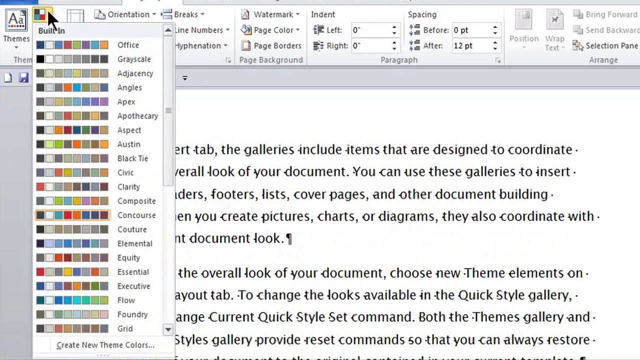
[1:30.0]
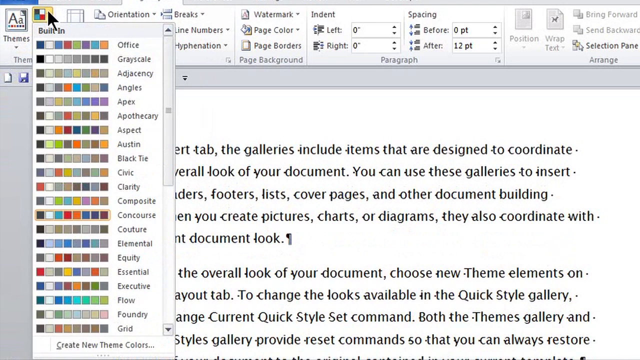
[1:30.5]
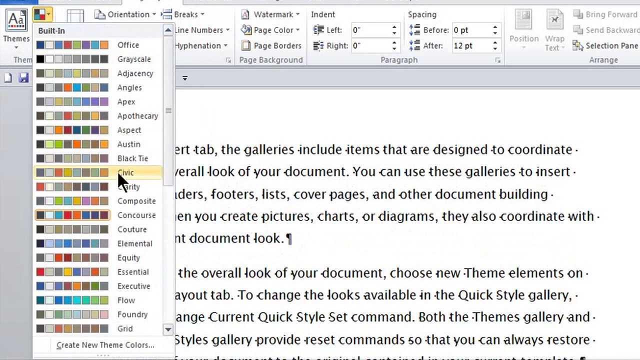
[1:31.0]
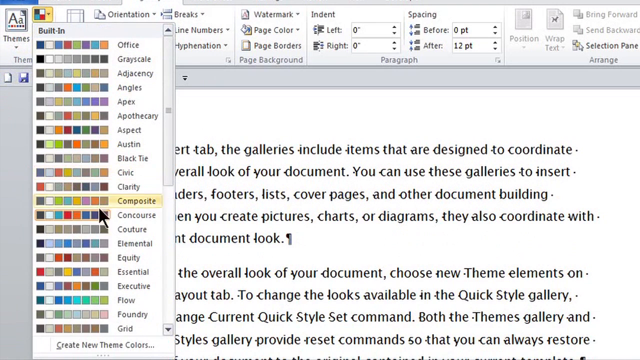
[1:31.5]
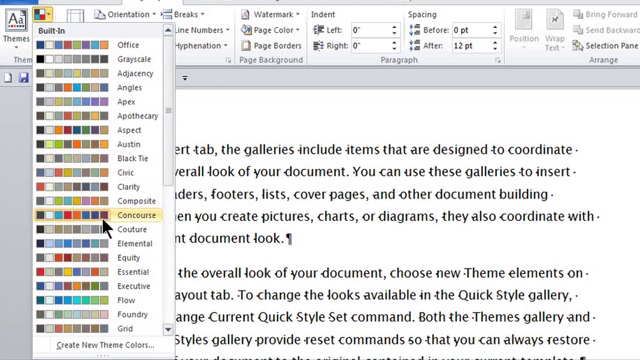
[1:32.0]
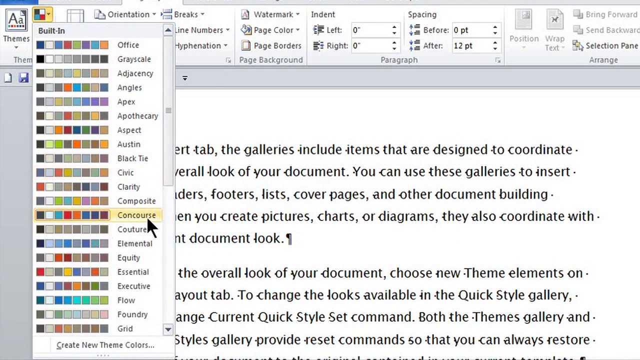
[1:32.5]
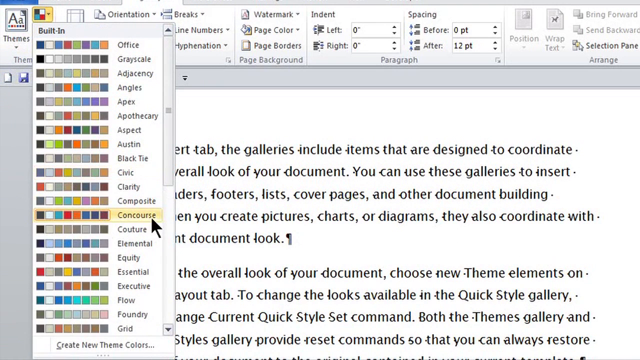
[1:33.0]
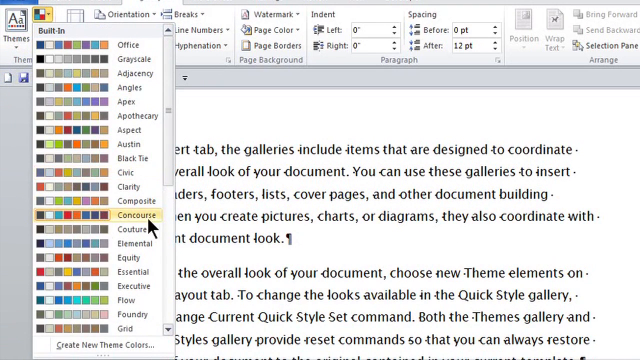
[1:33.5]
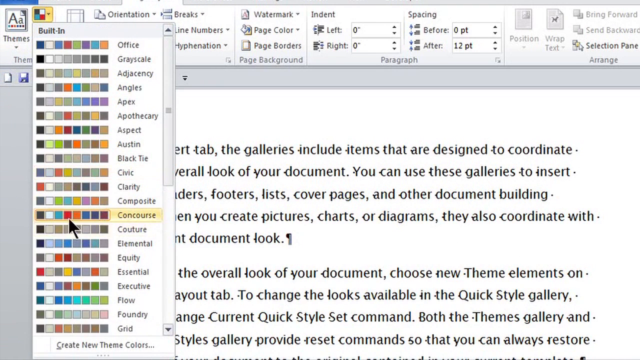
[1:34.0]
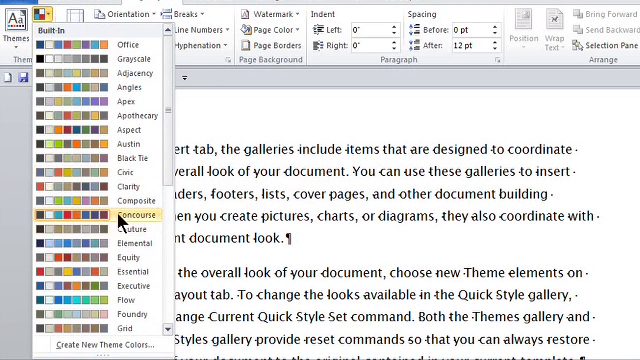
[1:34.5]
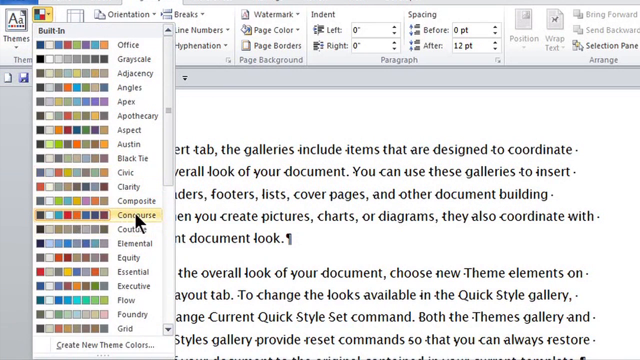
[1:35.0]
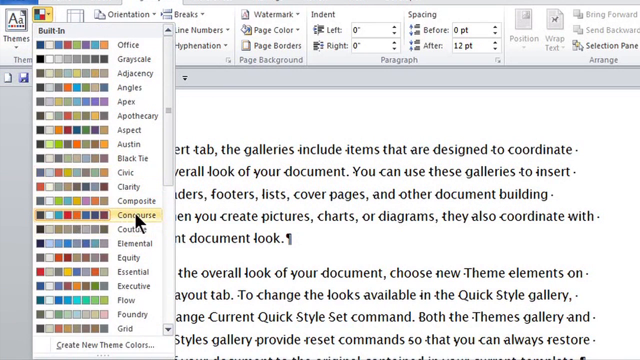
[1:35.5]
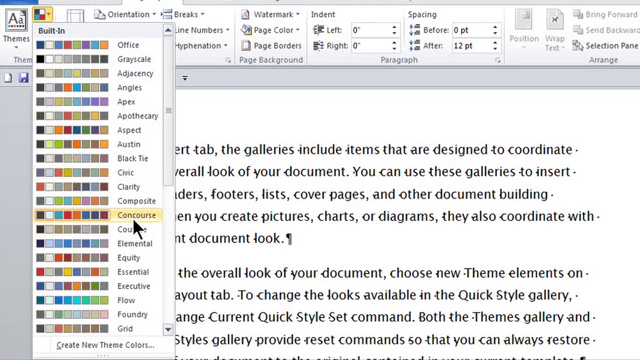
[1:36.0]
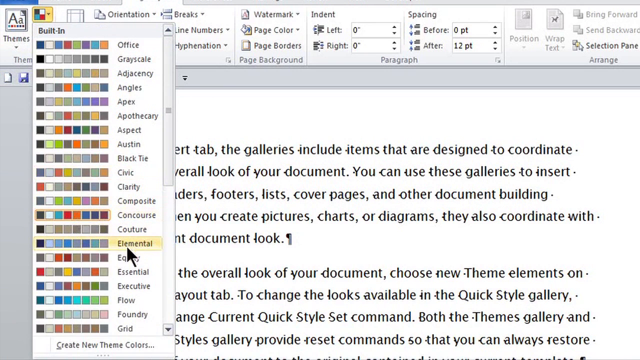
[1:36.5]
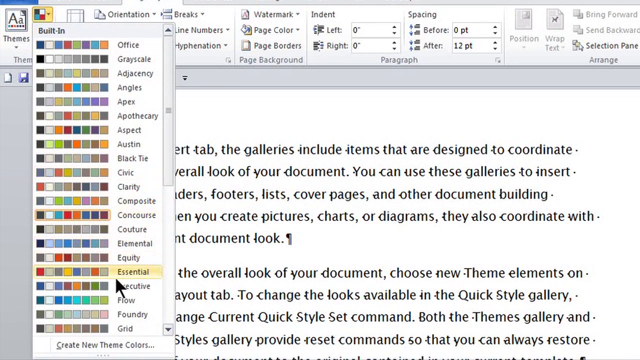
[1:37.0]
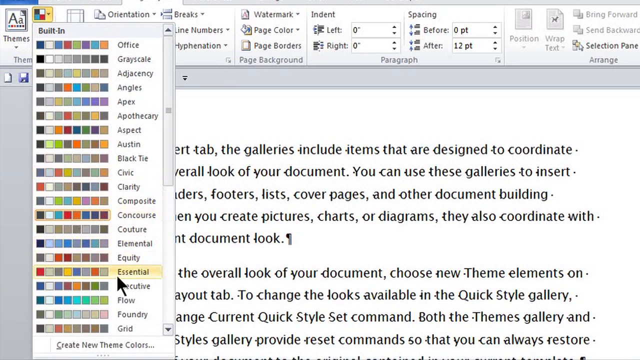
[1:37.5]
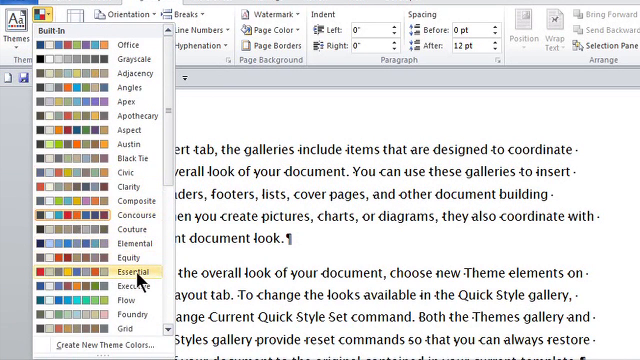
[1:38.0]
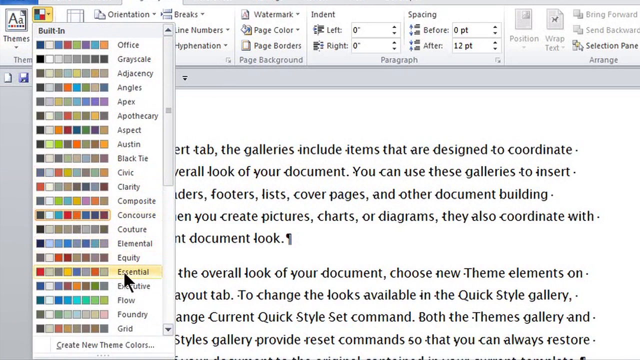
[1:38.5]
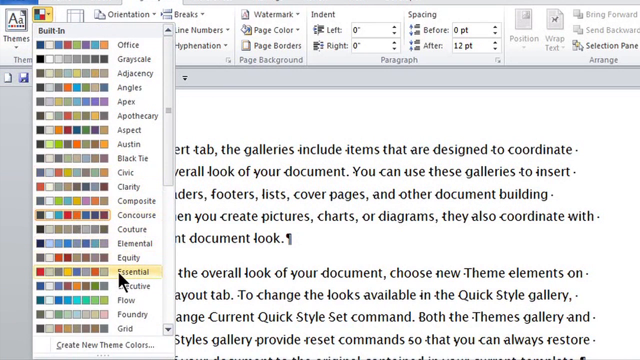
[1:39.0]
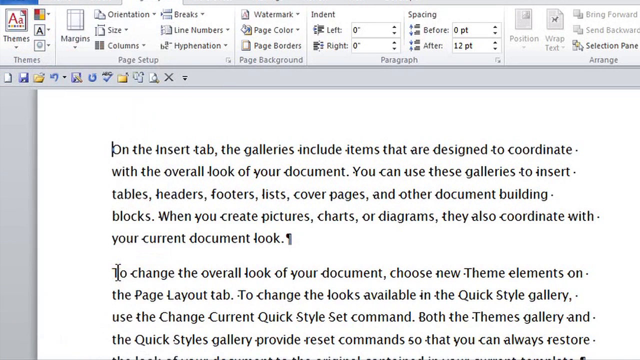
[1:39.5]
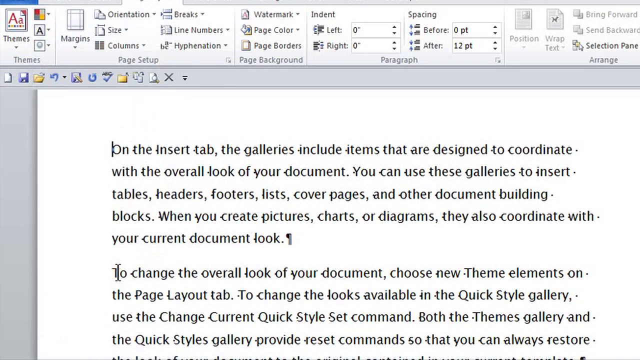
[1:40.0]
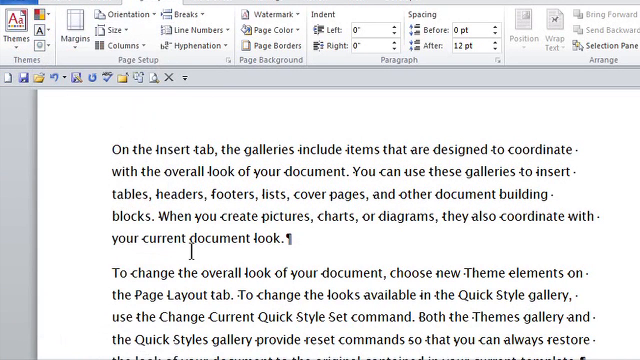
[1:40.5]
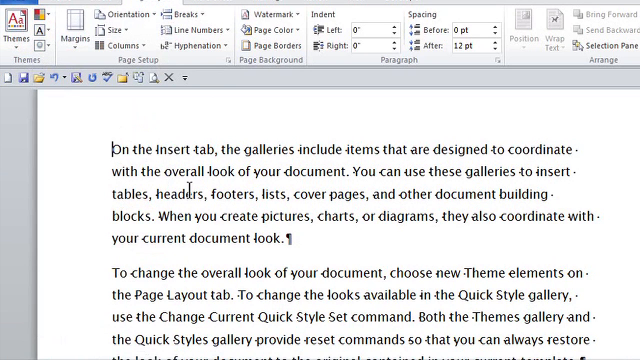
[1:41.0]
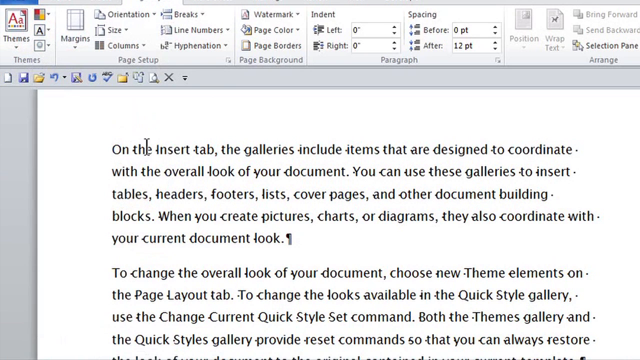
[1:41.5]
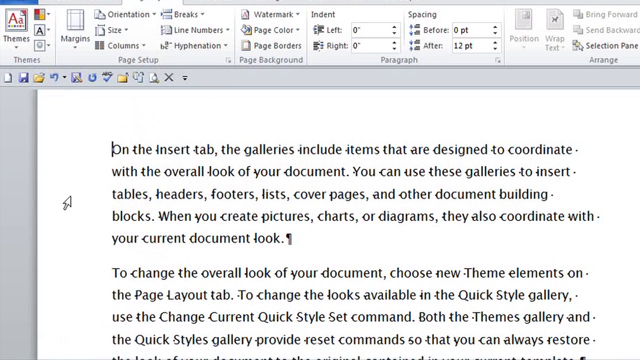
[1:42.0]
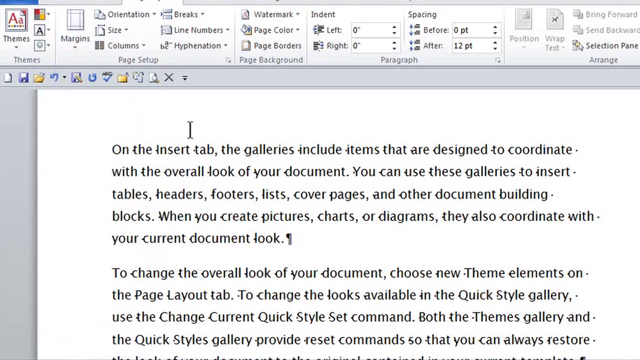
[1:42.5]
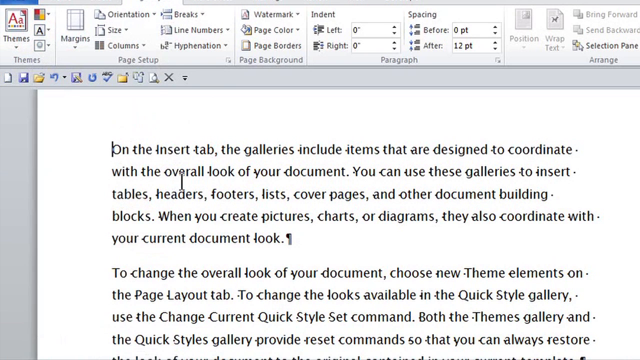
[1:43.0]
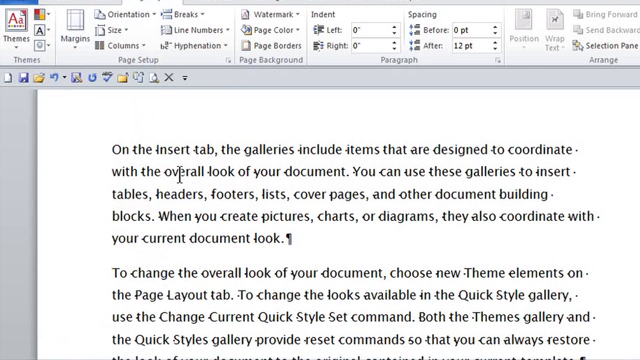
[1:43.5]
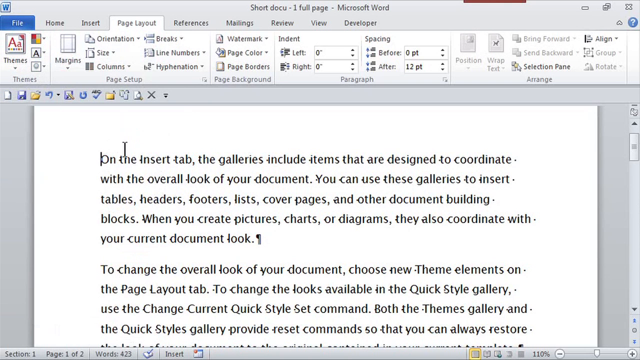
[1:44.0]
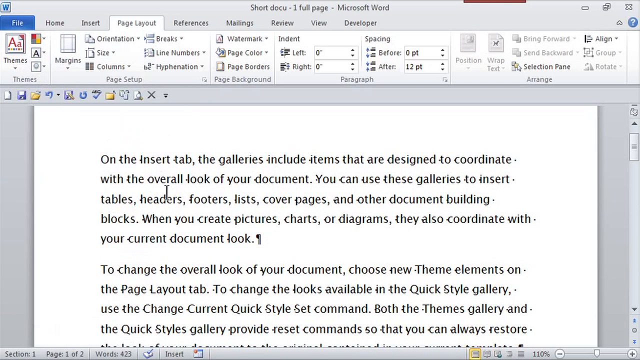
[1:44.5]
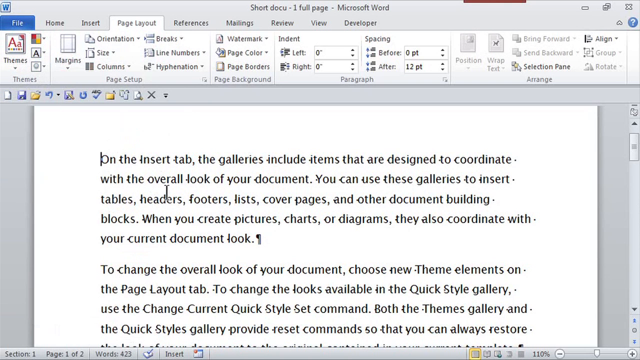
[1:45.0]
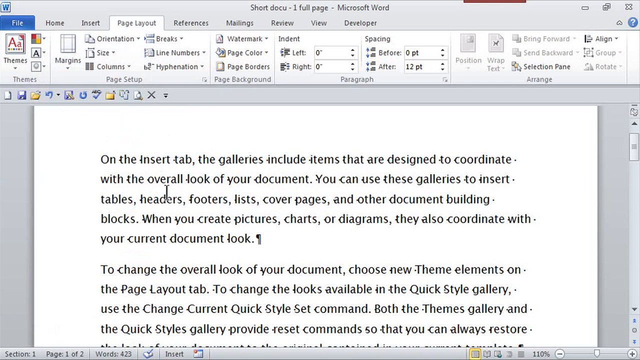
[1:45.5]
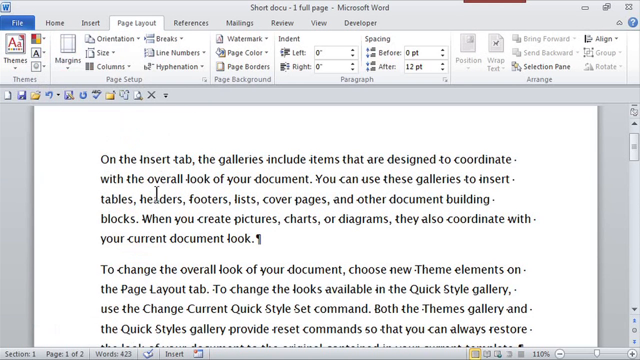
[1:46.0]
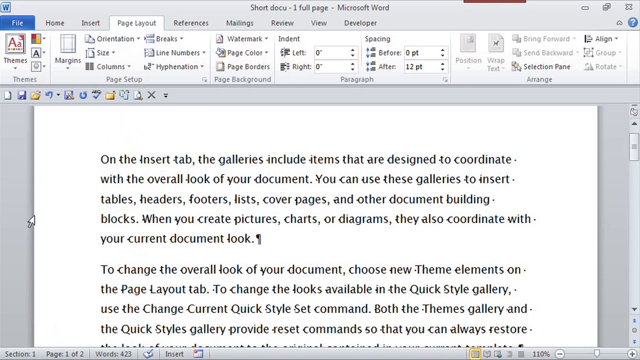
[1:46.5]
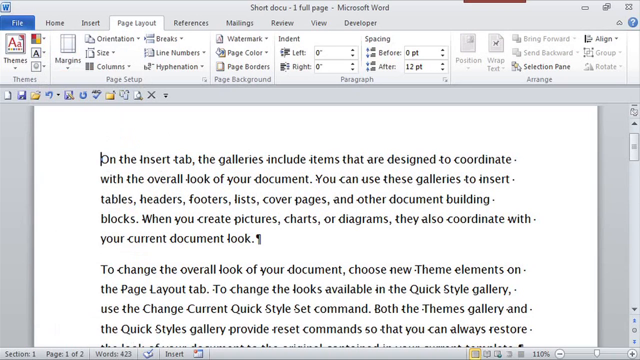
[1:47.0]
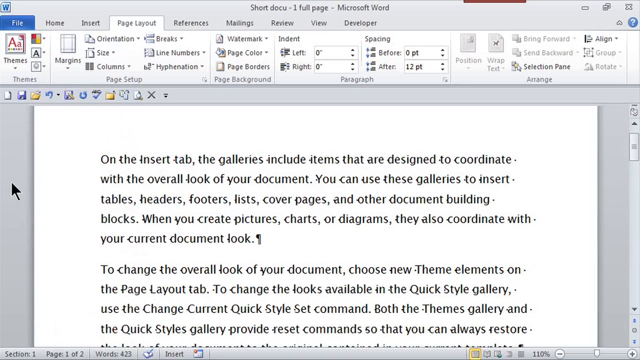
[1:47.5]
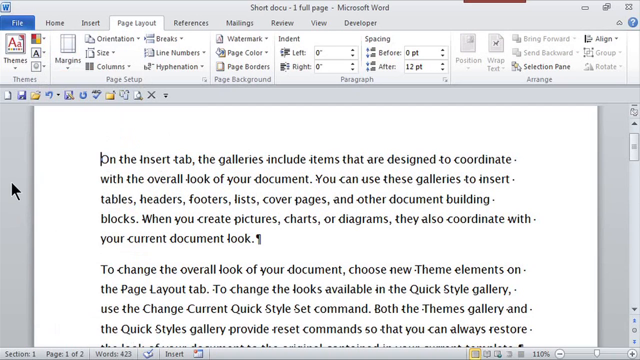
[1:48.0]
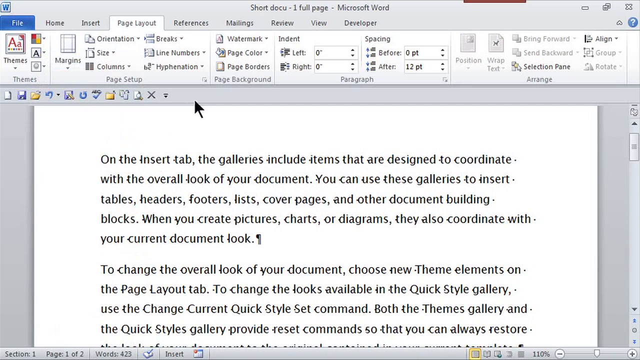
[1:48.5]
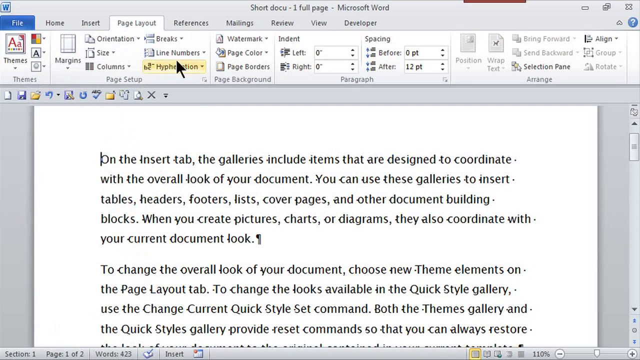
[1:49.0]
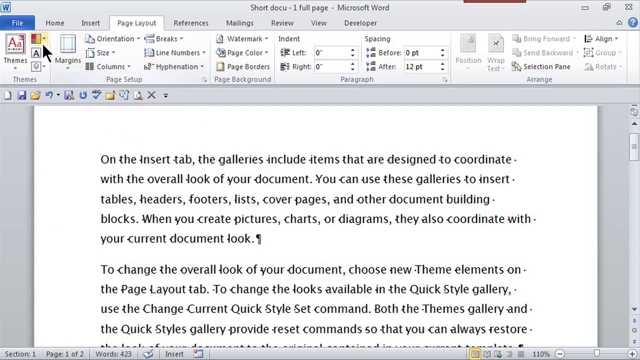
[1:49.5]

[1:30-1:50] A page shows a list of designs: office, office, grayscale, adjustments, angles, apex, apothecary aspect, Austin, black tie, civic, clarity, composite, concourse, culture, elemental, equity, essential, executive, floor, and boundary.